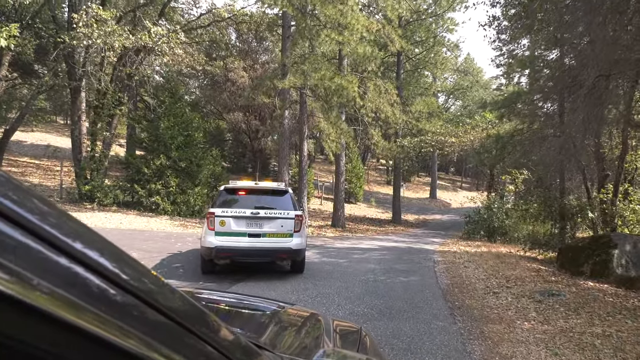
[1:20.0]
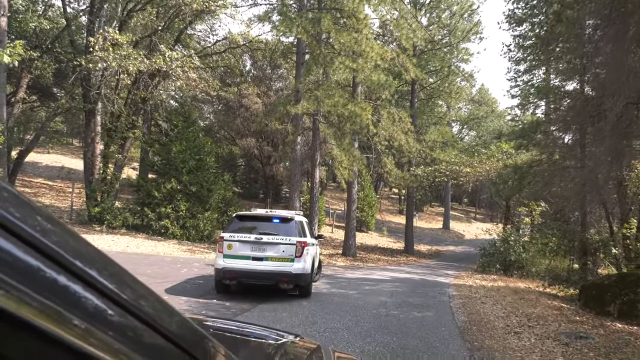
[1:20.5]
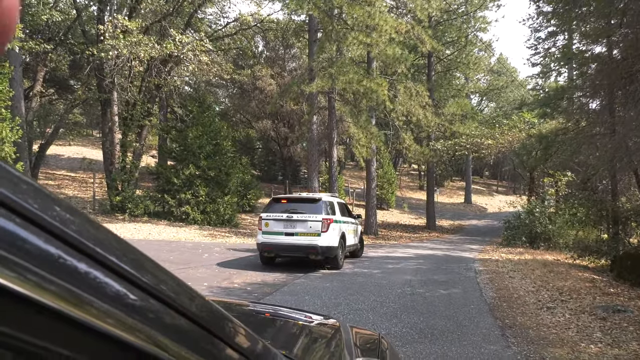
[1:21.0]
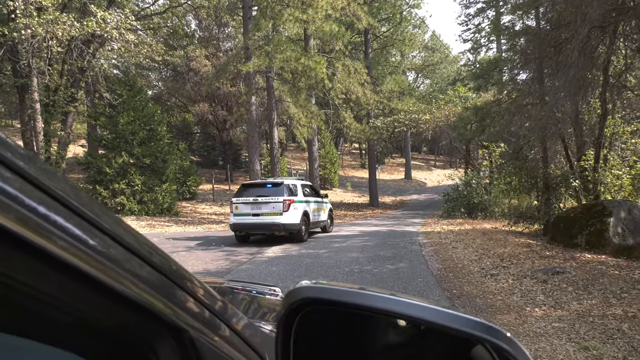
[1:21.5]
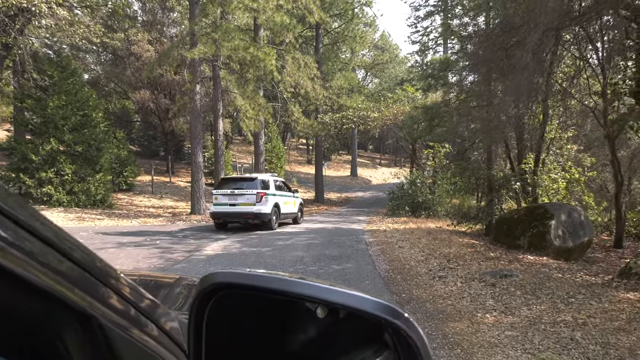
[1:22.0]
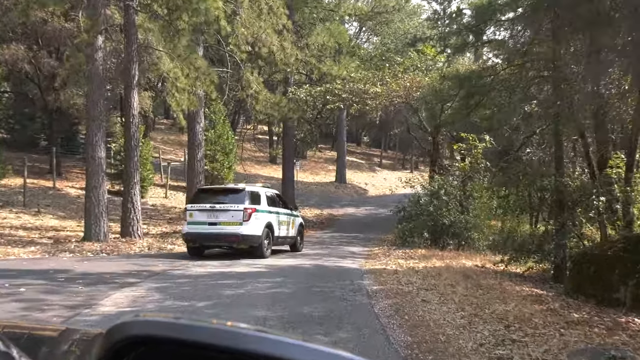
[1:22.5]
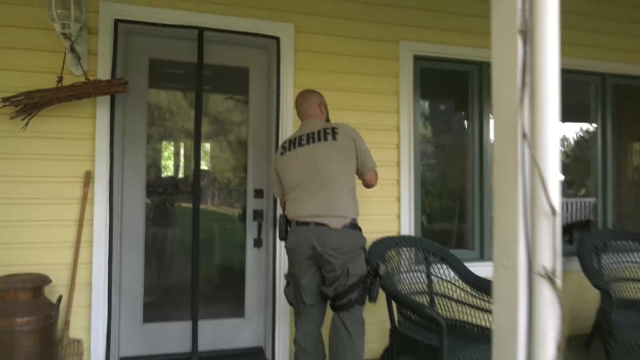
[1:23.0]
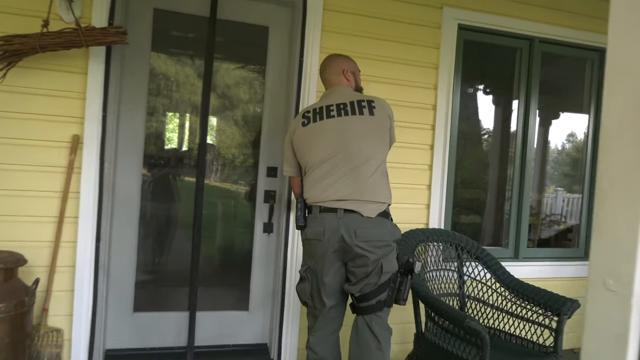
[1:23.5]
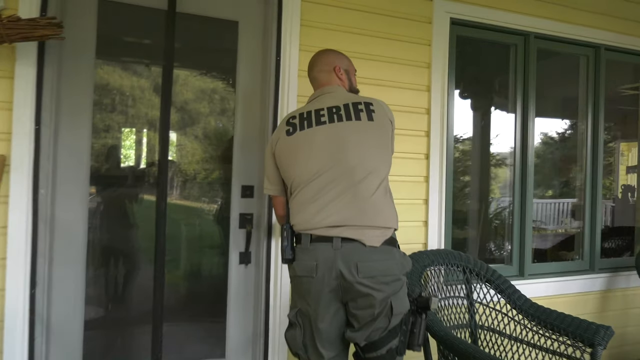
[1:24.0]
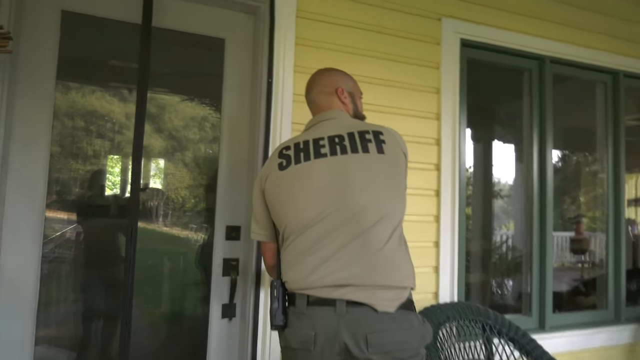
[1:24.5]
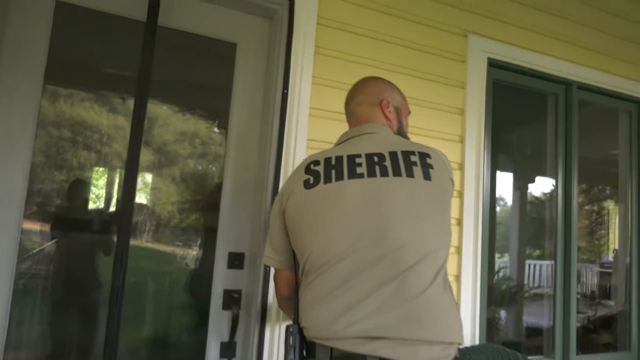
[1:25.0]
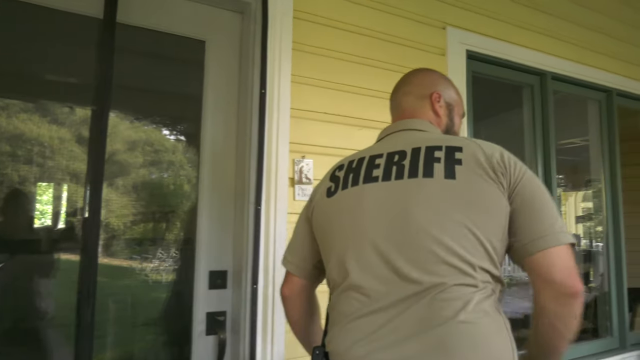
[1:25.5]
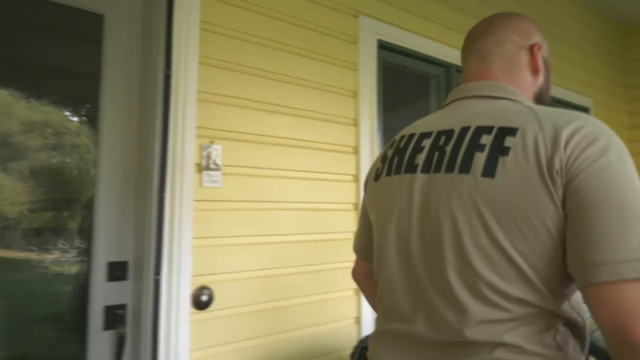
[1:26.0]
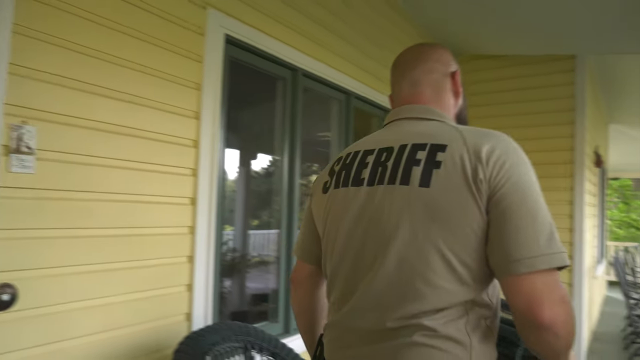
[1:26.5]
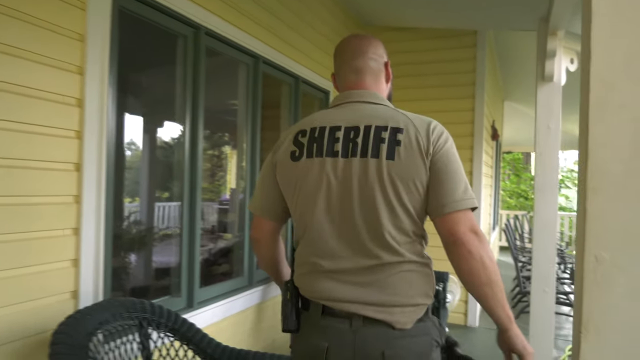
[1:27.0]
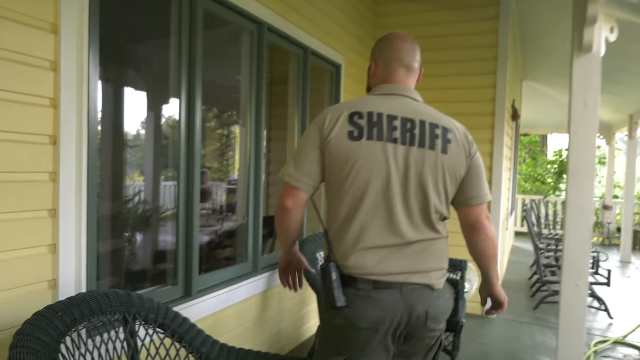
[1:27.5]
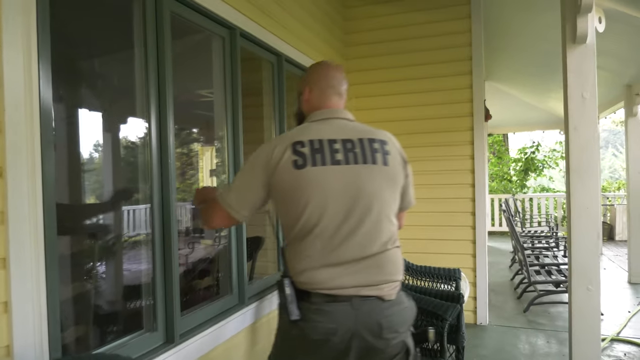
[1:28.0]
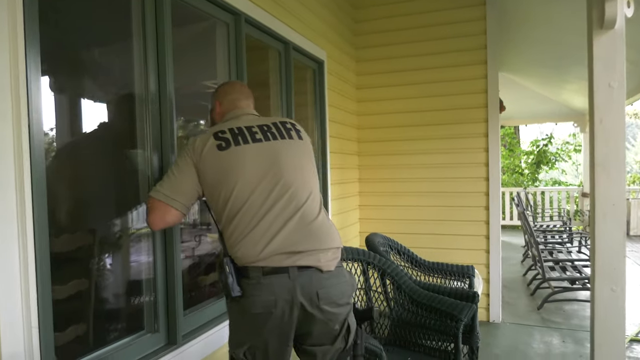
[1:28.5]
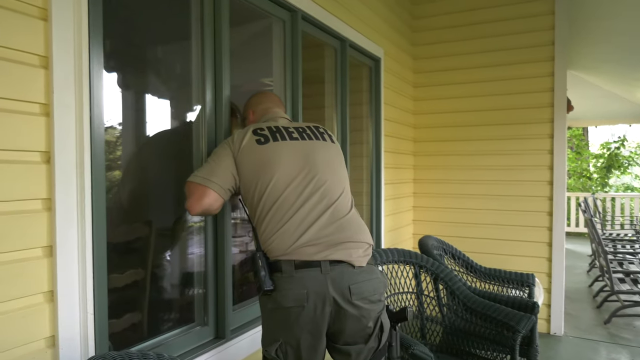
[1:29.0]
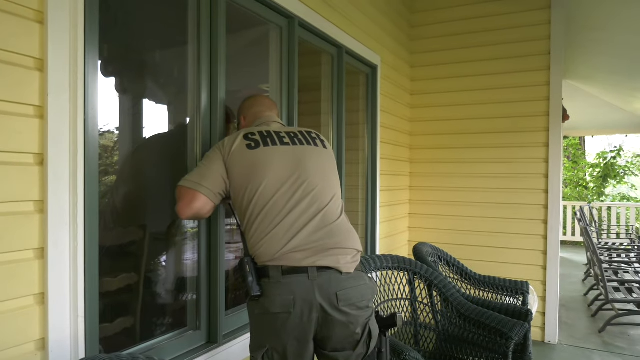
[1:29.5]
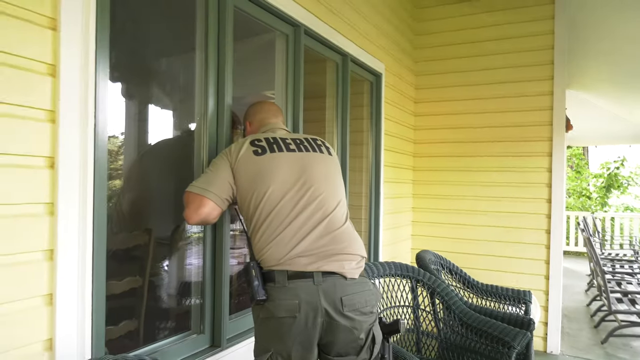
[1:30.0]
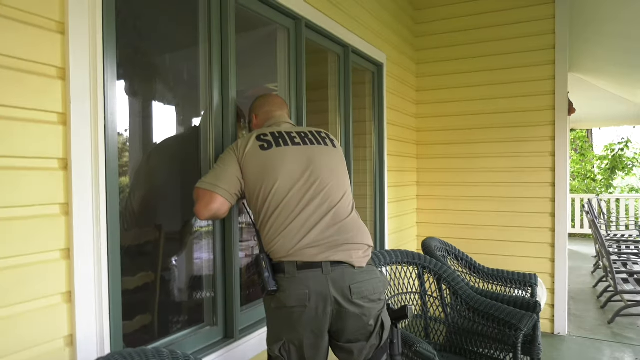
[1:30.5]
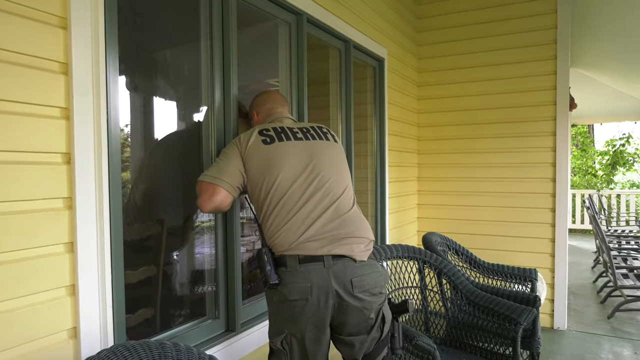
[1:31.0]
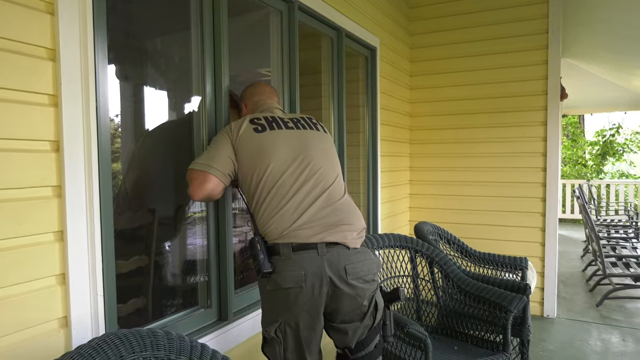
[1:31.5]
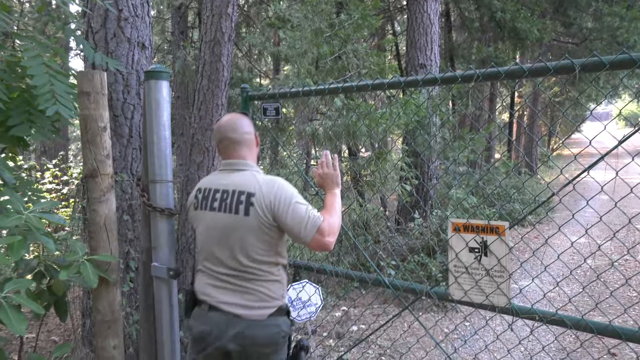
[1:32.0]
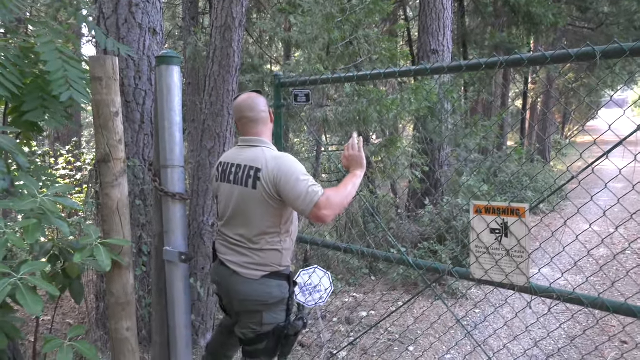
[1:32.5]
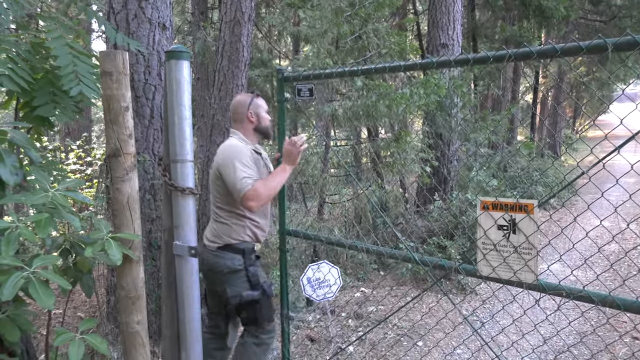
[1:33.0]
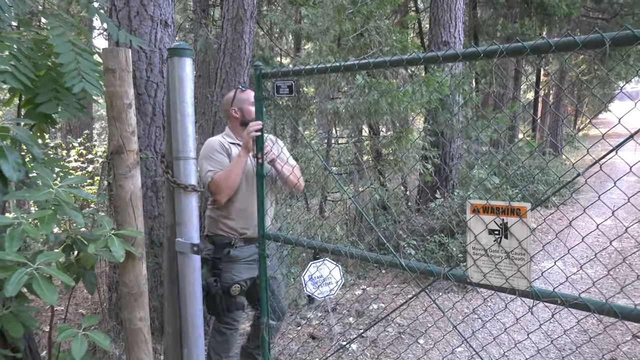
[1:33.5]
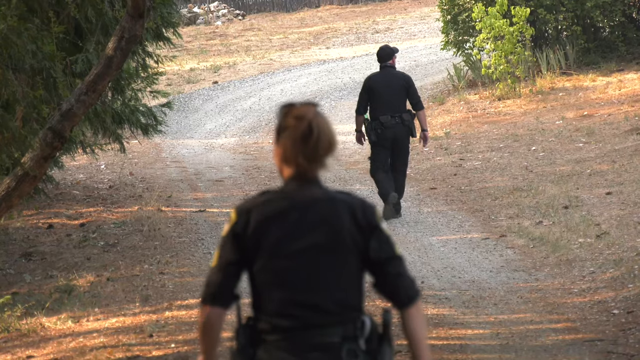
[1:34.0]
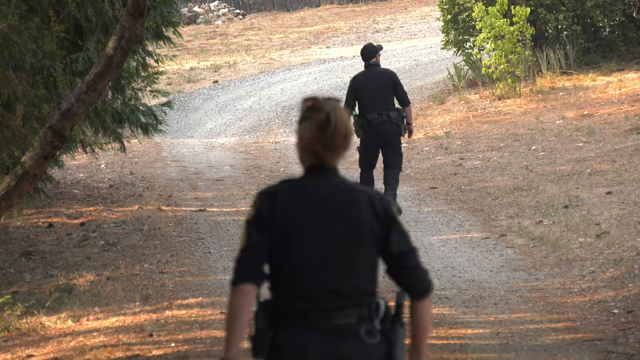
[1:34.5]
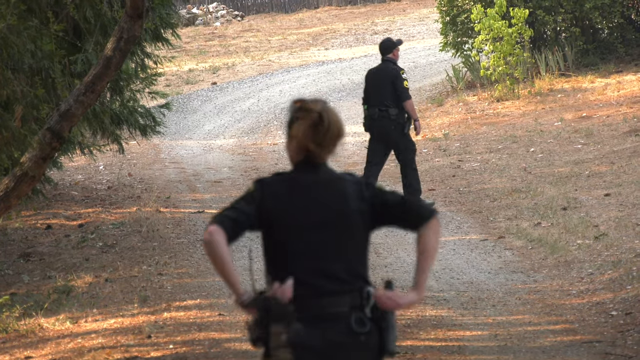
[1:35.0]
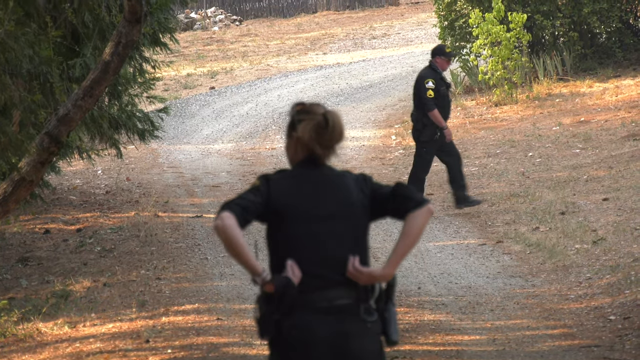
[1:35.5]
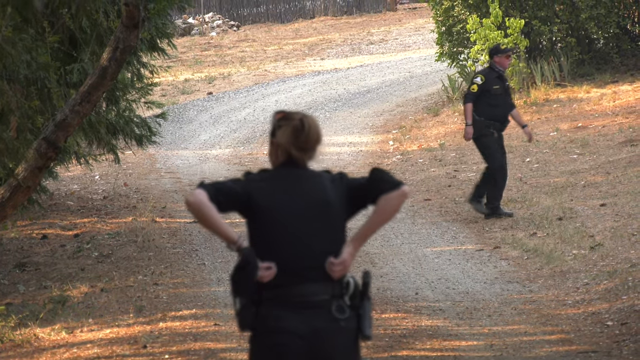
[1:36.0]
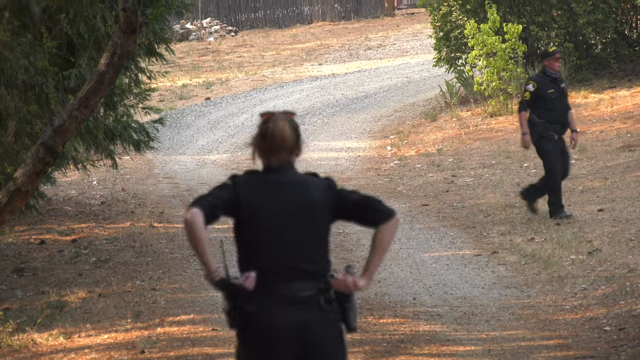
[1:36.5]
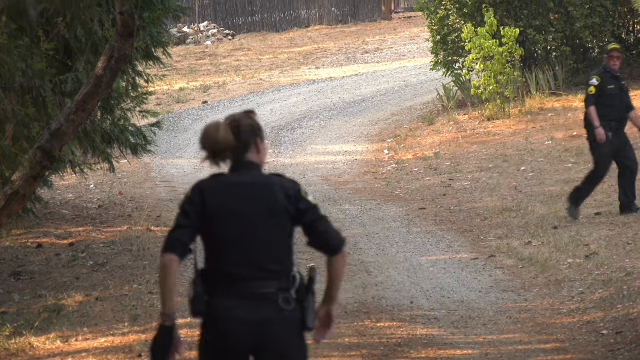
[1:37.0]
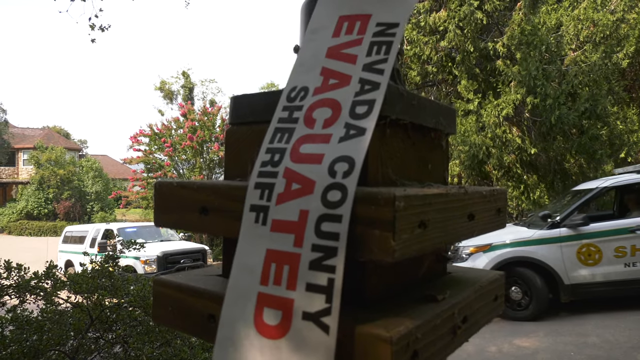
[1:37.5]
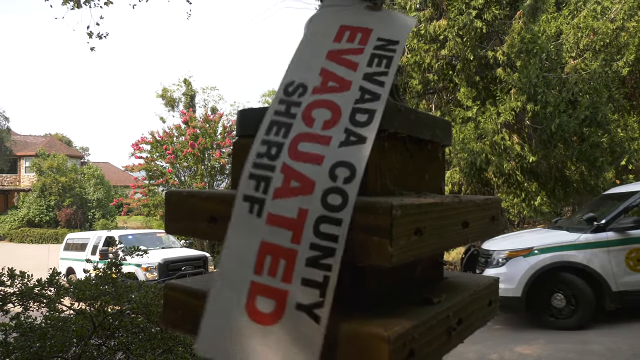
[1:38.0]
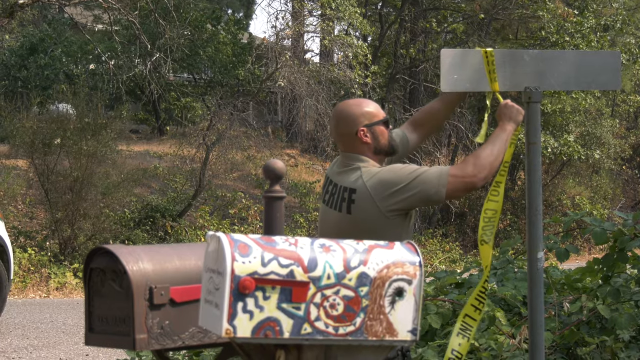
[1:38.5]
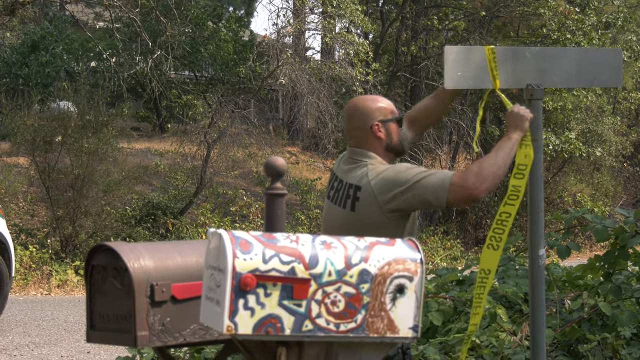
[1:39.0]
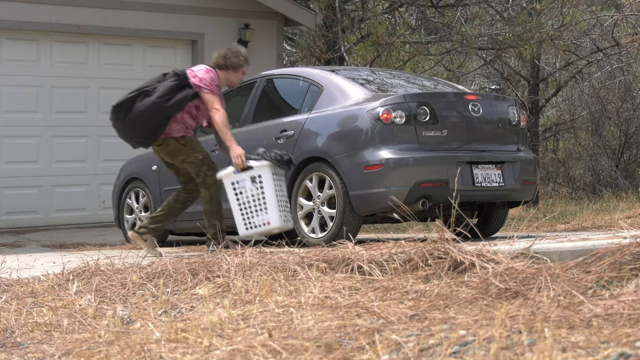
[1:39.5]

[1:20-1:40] Two cars belonging to the sheriff go around the neighborhood door to door, checking who is still there. The officers knock on doors, ring doorbells, walk around houses and look through the windows to see whether anyone is still inside.